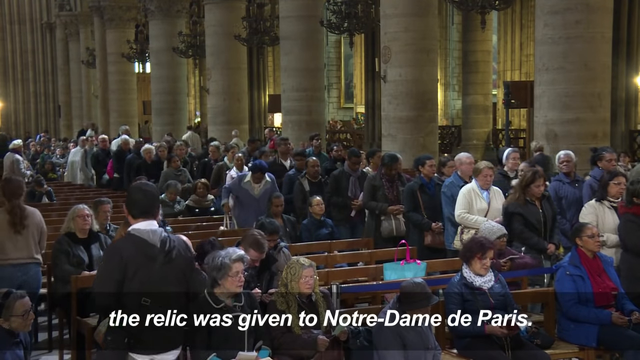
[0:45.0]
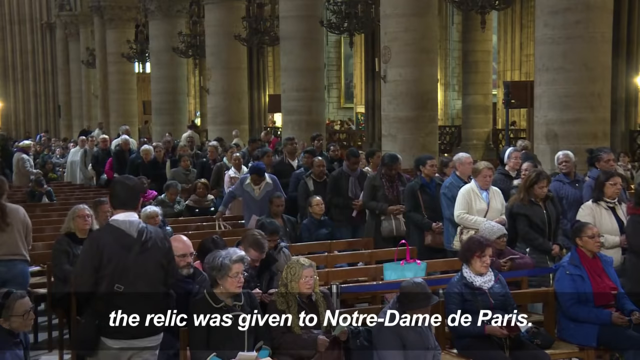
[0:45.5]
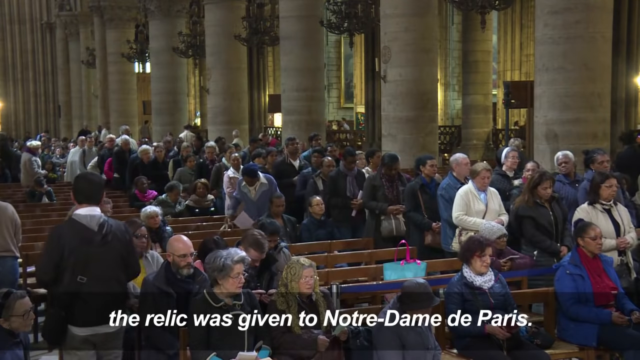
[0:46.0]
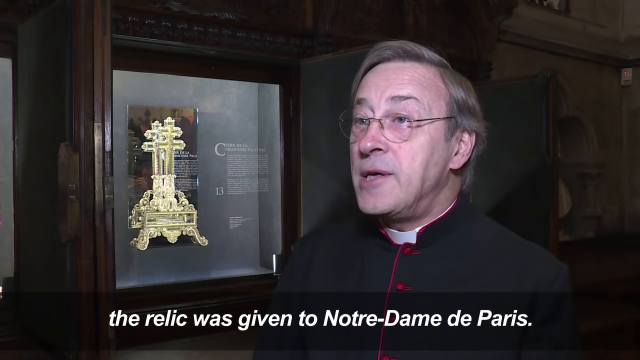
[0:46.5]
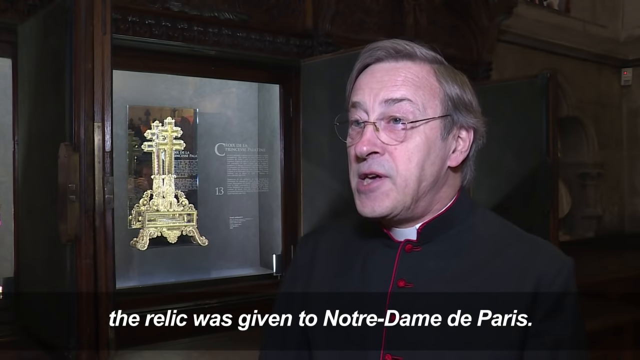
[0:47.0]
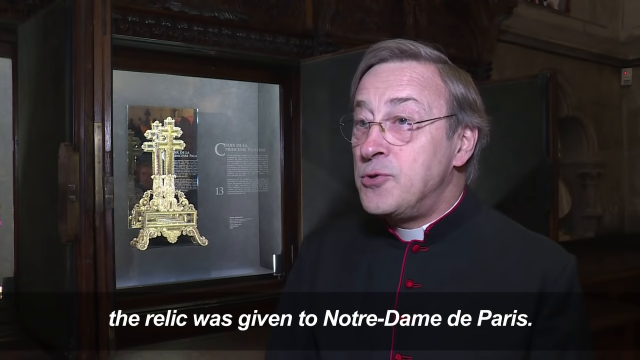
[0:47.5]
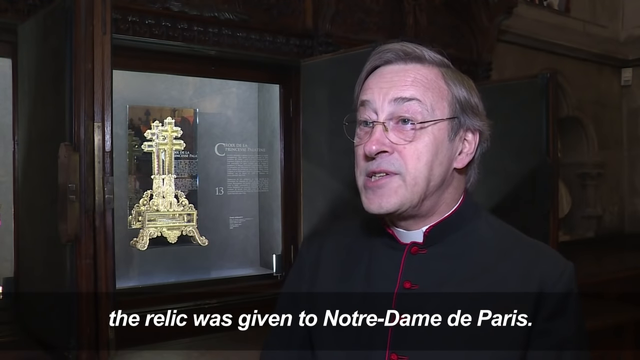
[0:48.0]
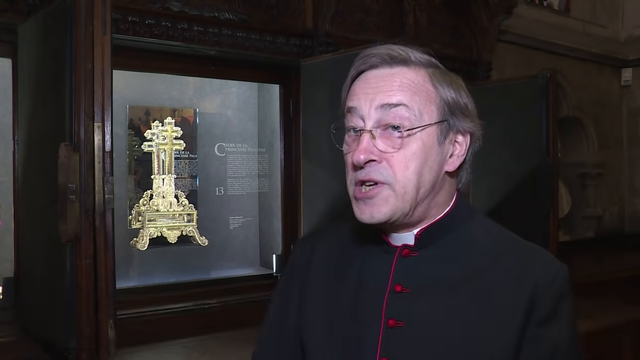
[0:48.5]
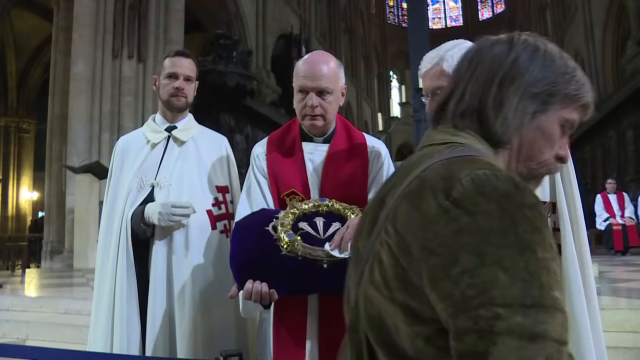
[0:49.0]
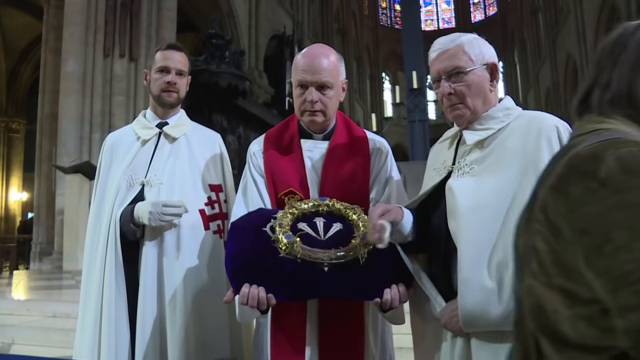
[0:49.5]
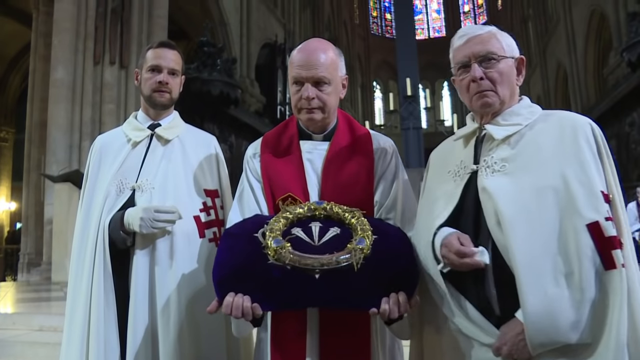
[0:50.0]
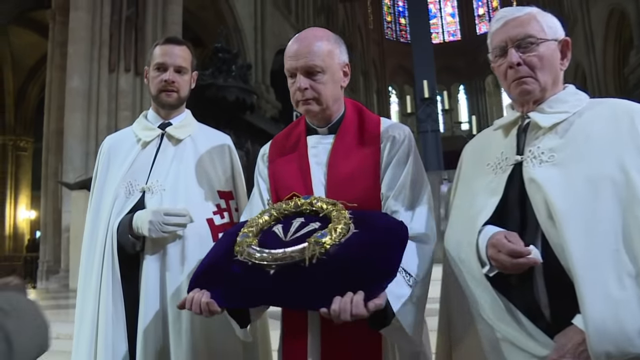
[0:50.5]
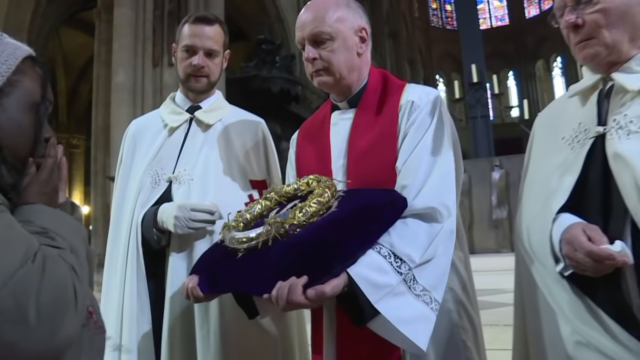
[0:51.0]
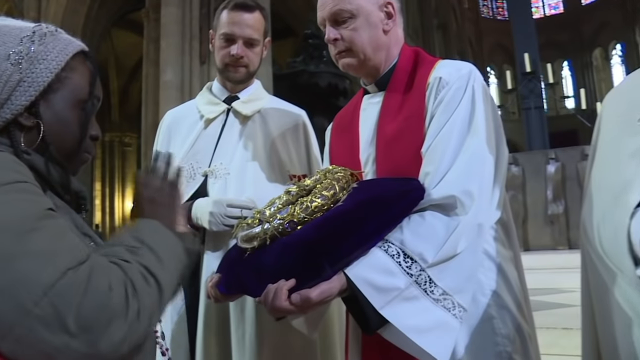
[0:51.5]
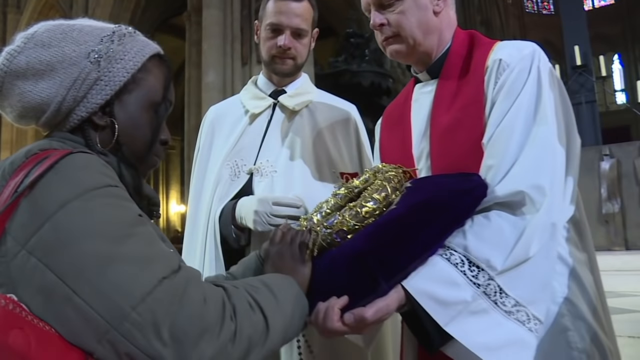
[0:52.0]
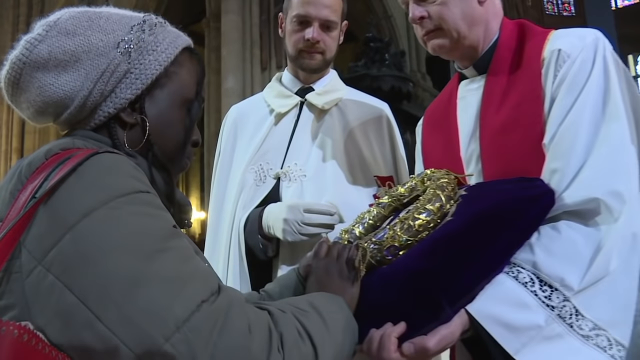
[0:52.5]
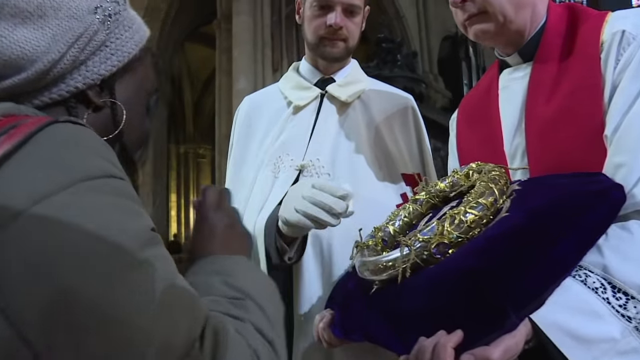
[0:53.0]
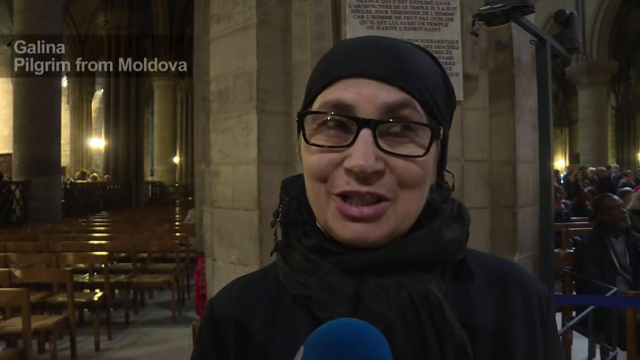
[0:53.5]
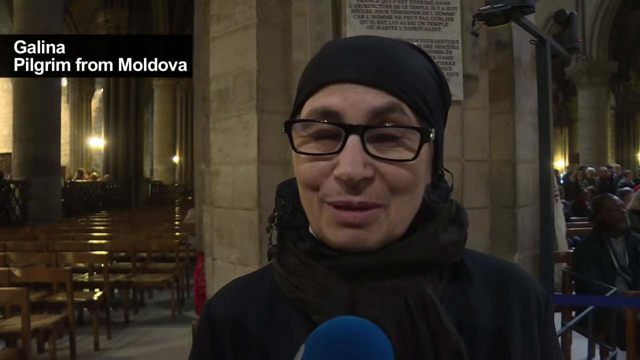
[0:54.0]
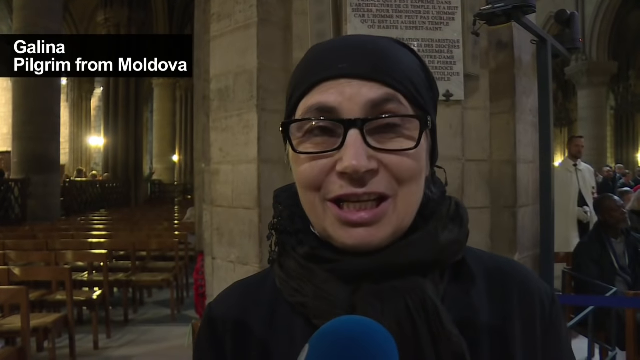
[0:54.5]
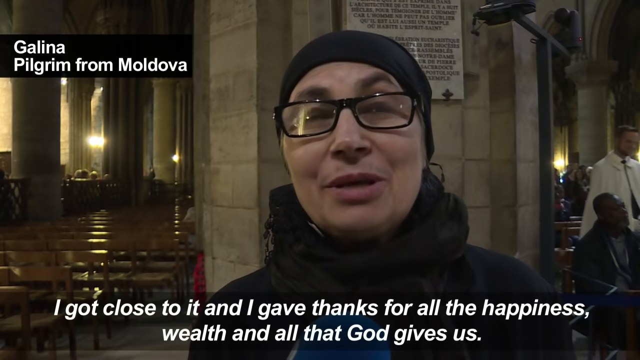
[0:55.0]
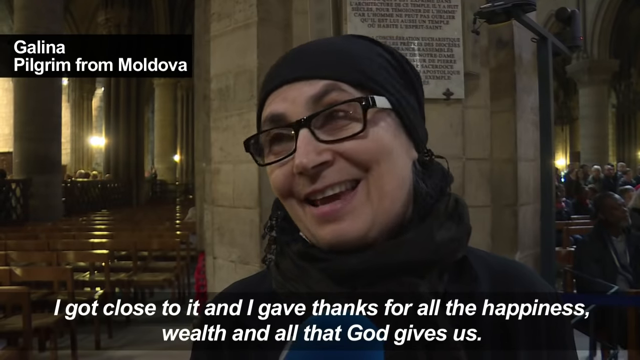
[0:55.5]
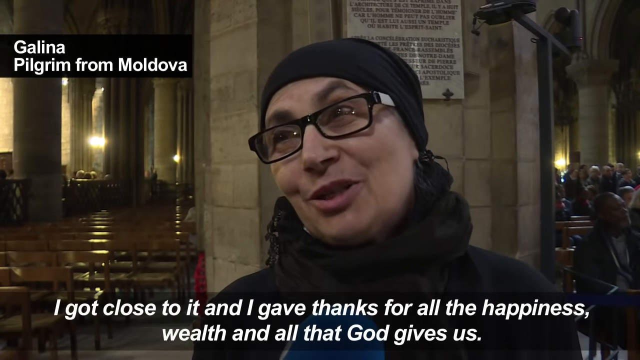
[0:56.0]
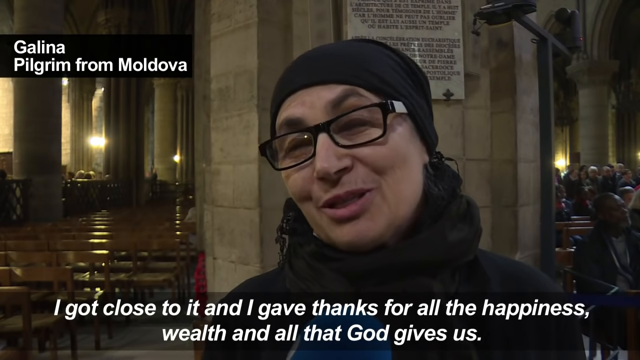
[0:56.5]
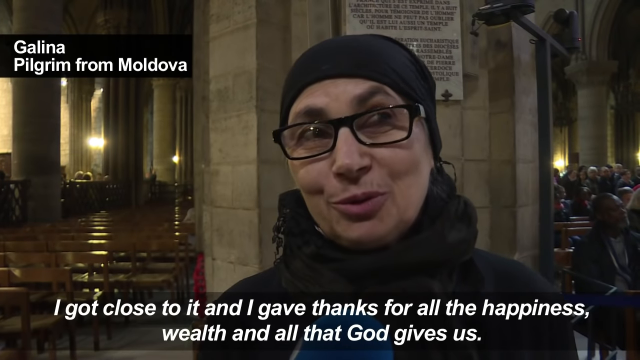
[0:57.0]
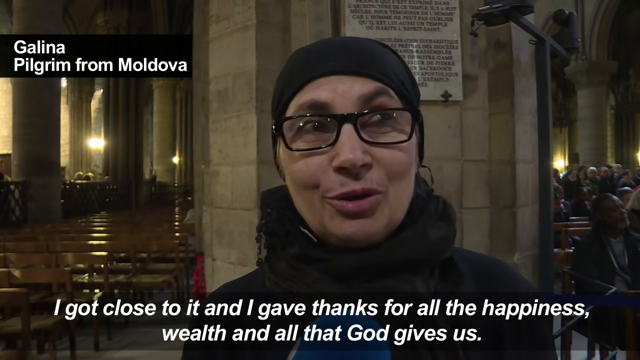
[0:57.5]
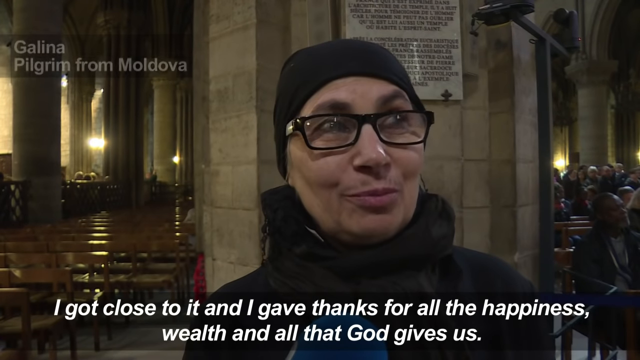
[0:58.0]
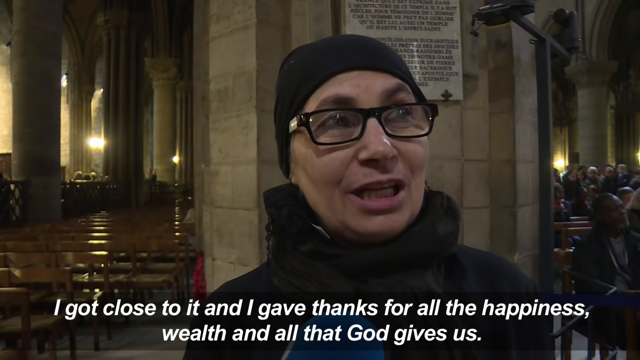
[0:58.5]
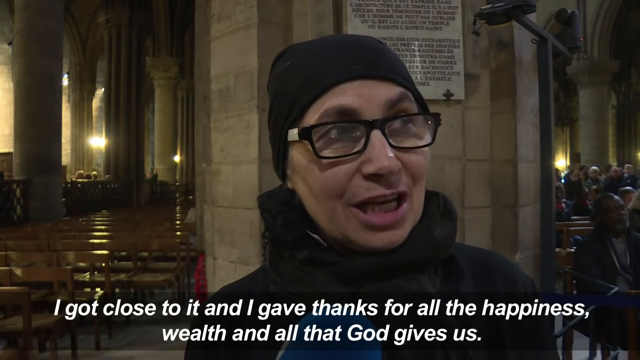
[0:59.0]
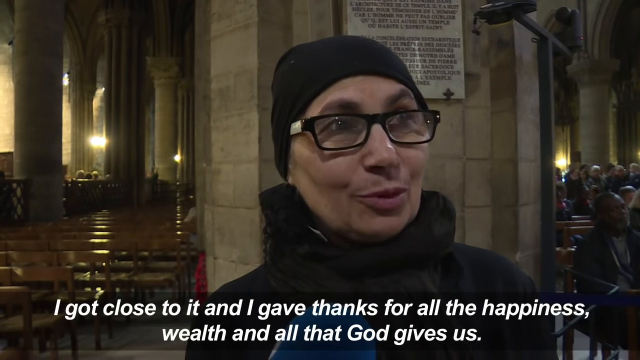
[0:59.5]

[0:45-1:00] People wait in line inside the church for a chance to touch the crown while the priest says the relic was given to Notre Dame de Paris. The priest appears, then a close view shows people holding the crown and people kissing it. Galina, a pilgrim from Moldova, is interviewed and says, "I got close to it and I gave thanks for all the happiness and wealth and all that God gives us." The segment ends with the priest holding the crown up while people touch it and wait in line. All of this takes place inside the church.